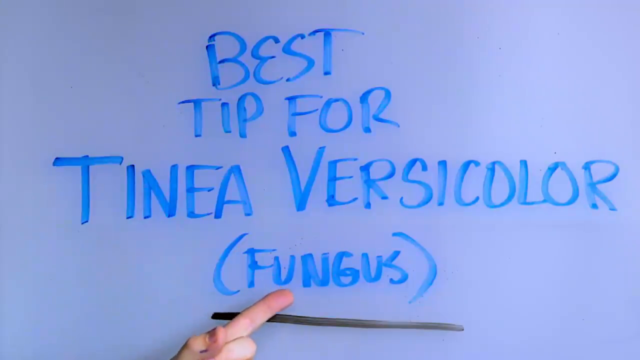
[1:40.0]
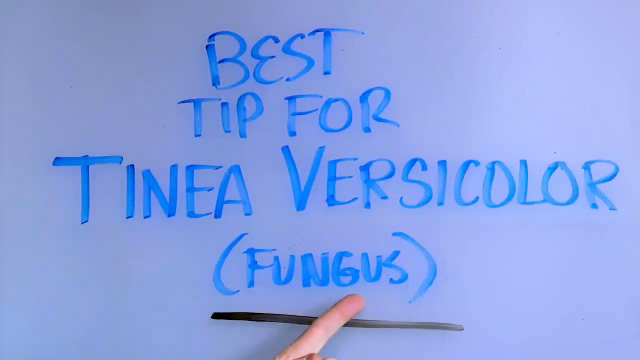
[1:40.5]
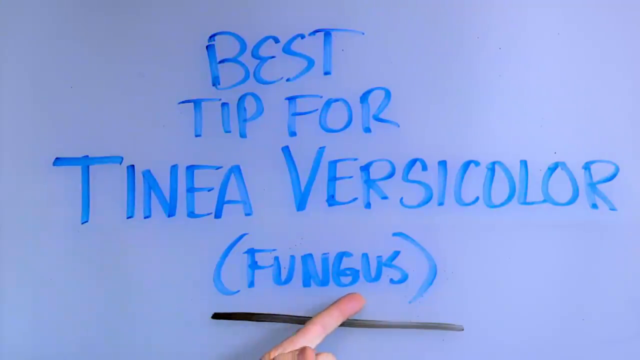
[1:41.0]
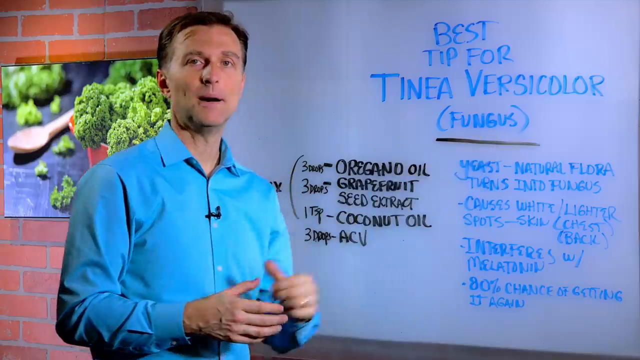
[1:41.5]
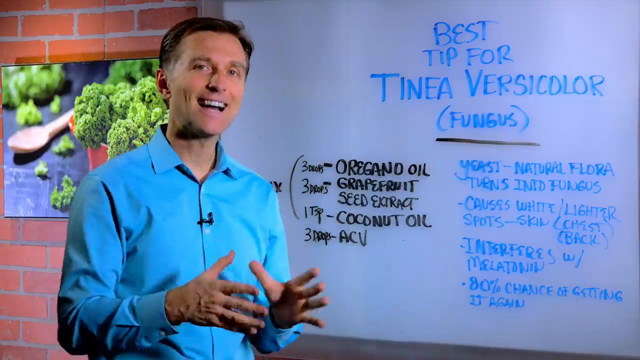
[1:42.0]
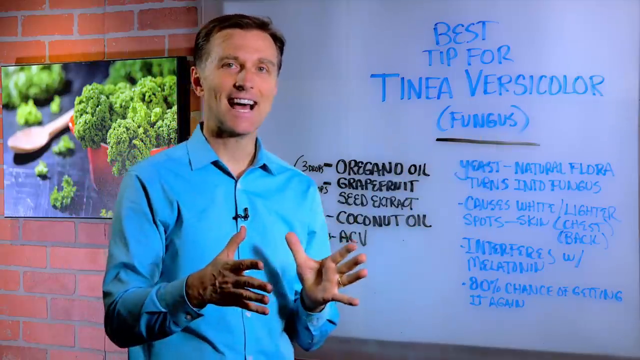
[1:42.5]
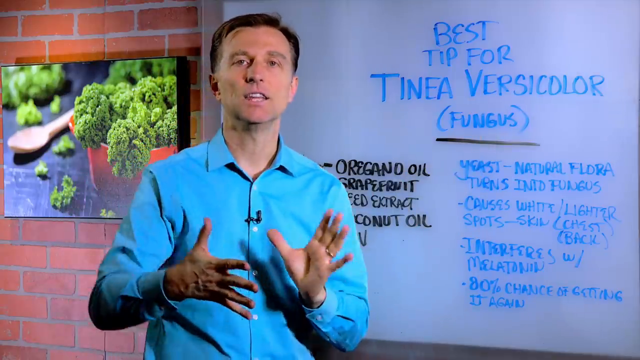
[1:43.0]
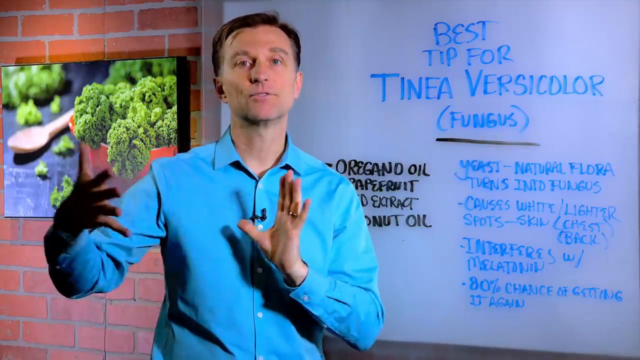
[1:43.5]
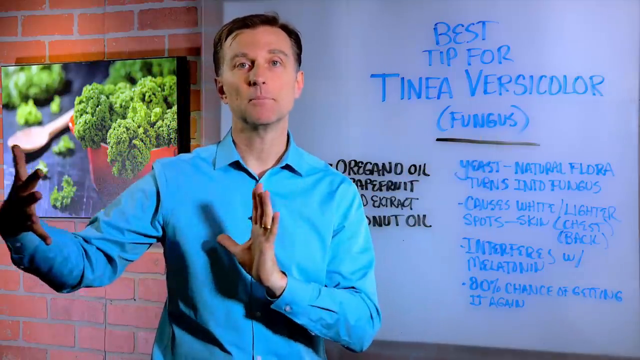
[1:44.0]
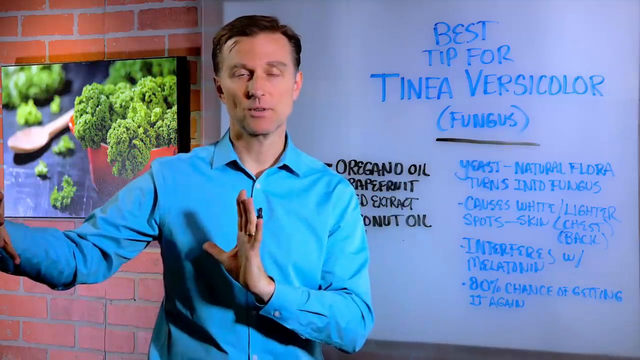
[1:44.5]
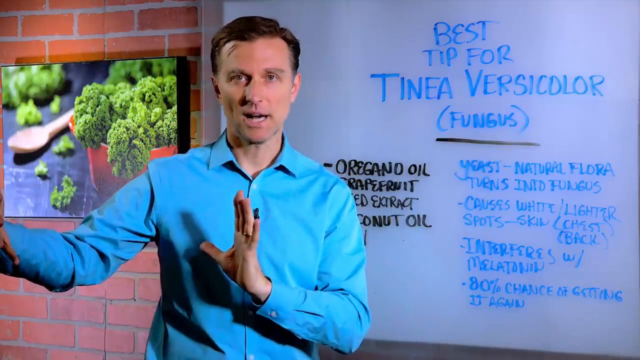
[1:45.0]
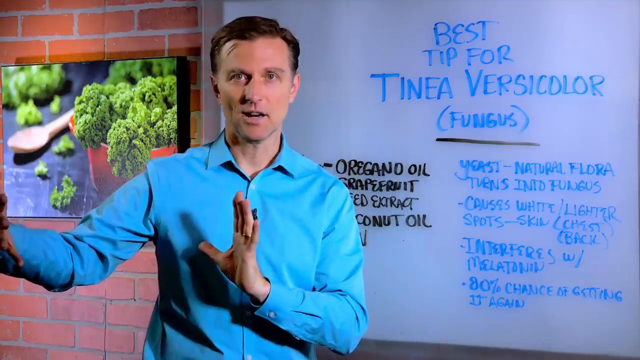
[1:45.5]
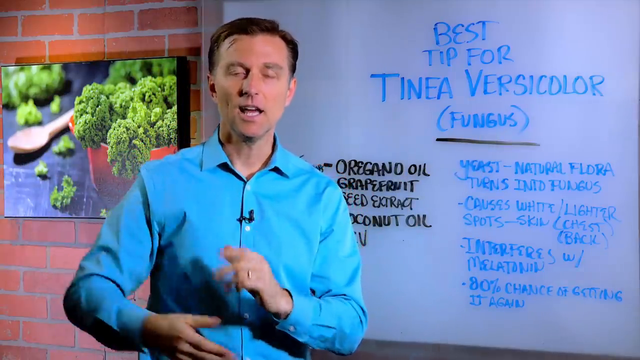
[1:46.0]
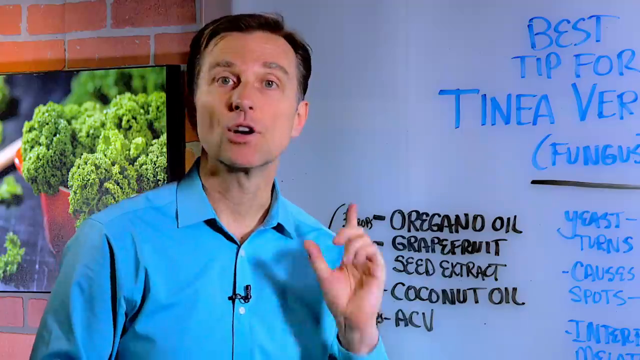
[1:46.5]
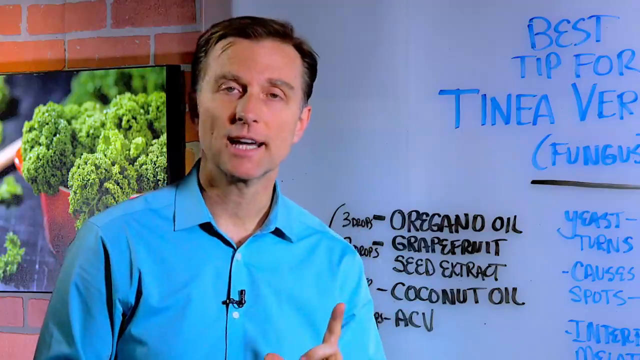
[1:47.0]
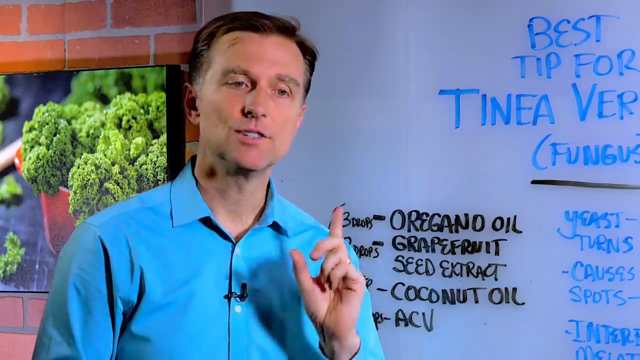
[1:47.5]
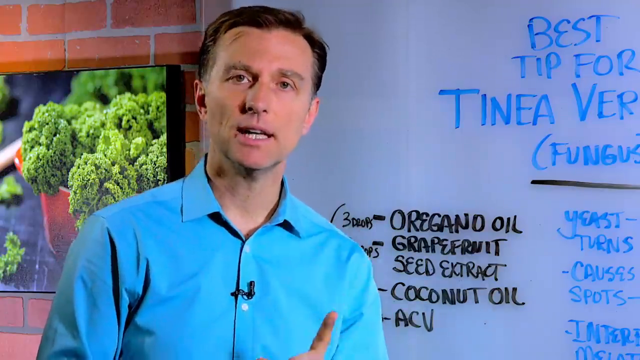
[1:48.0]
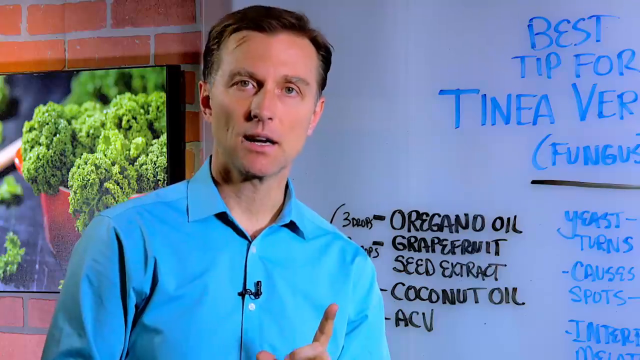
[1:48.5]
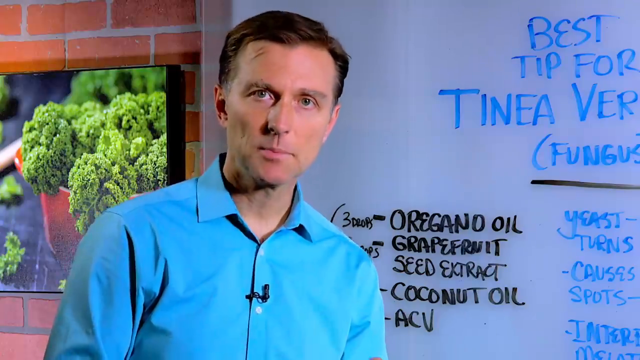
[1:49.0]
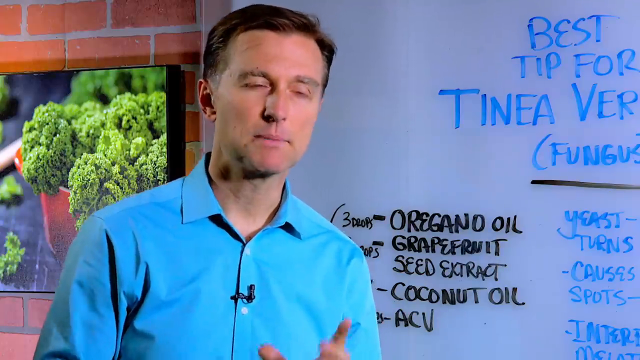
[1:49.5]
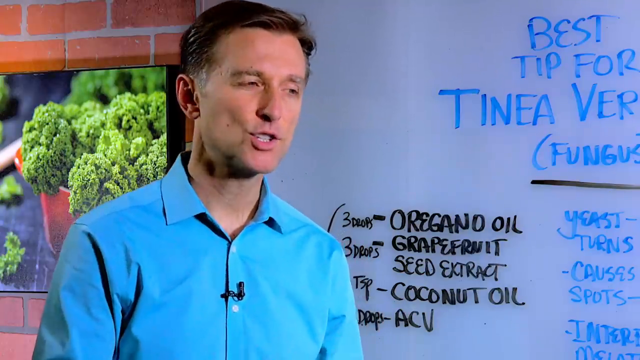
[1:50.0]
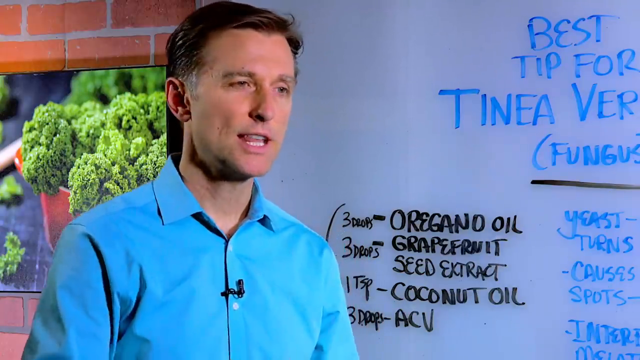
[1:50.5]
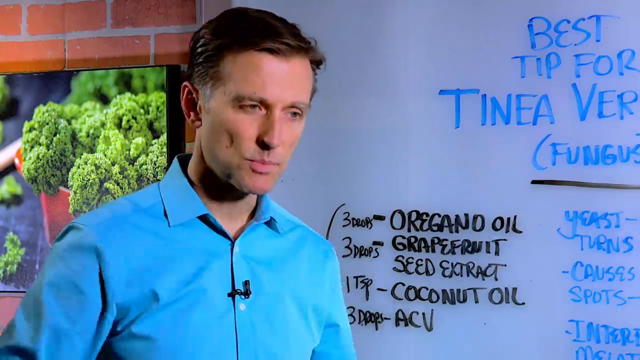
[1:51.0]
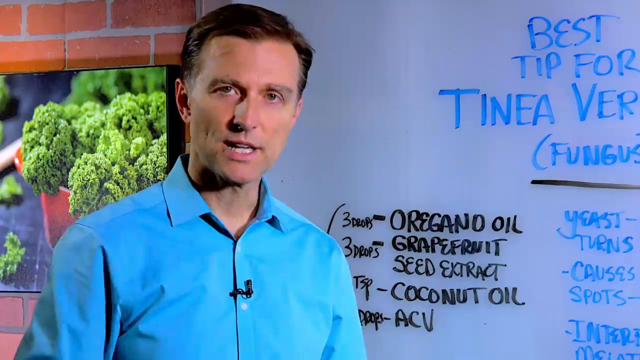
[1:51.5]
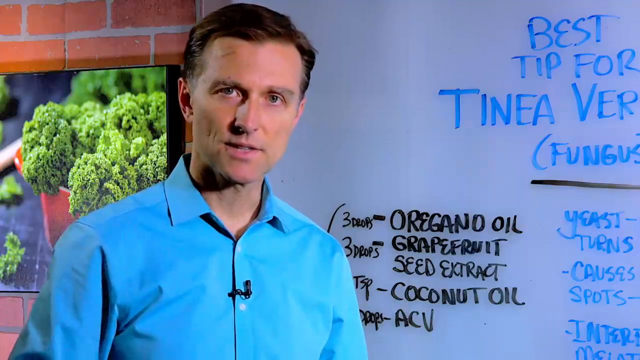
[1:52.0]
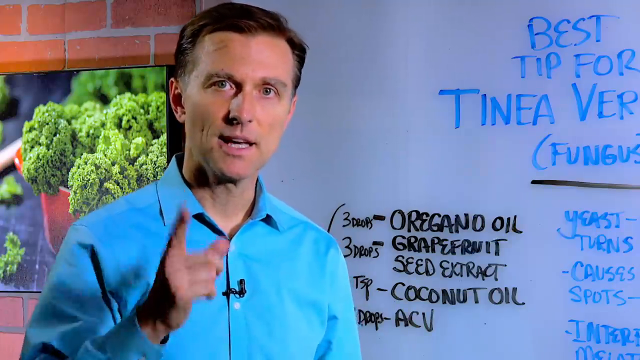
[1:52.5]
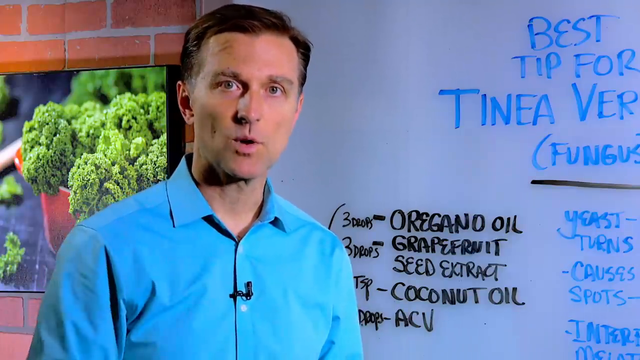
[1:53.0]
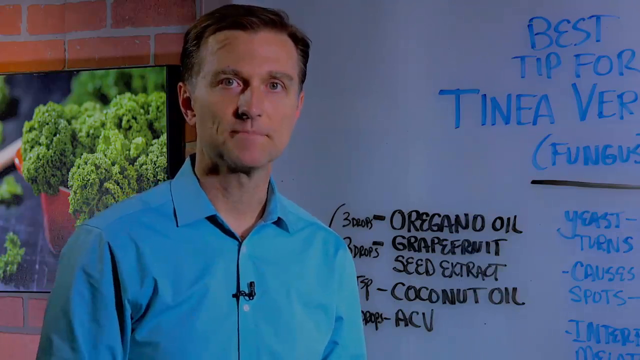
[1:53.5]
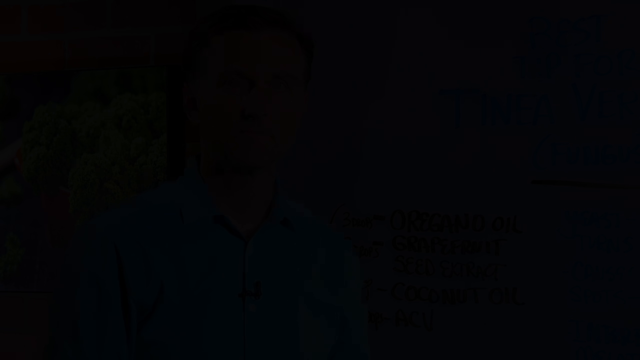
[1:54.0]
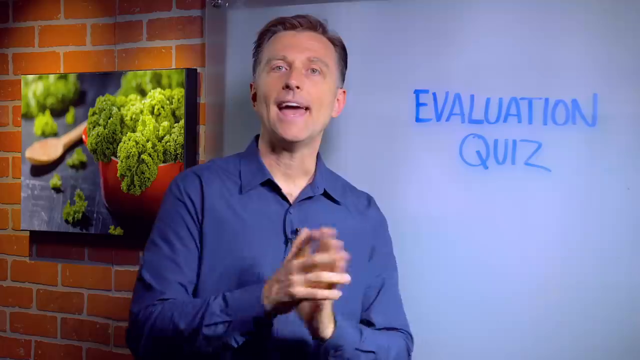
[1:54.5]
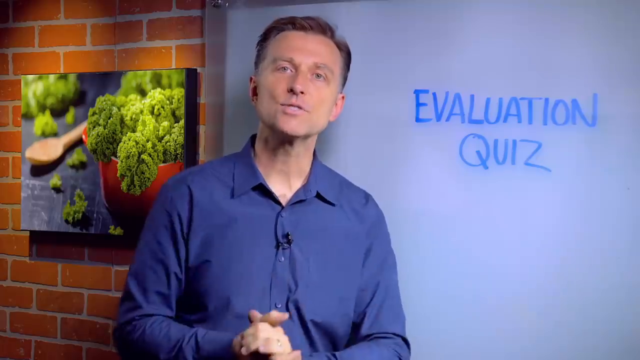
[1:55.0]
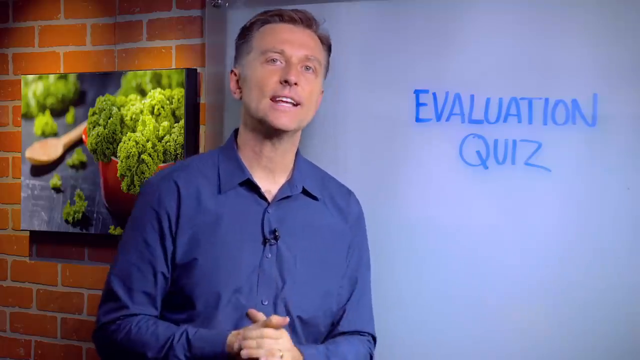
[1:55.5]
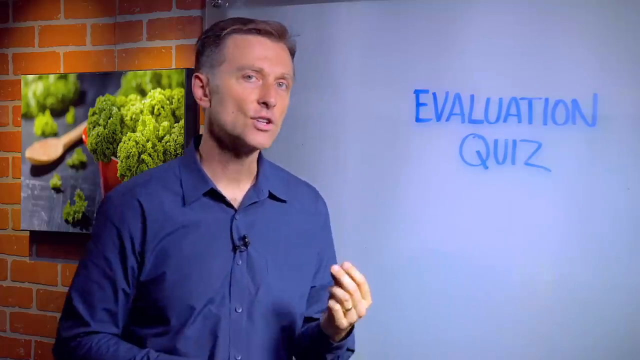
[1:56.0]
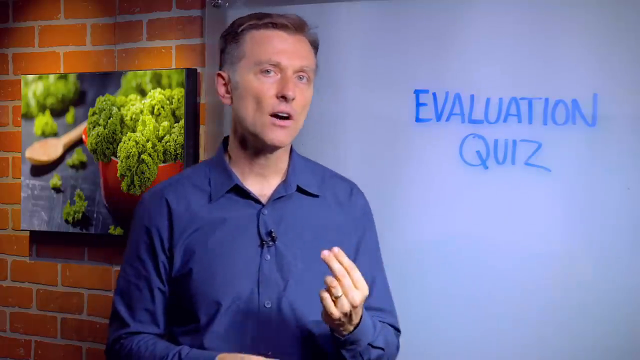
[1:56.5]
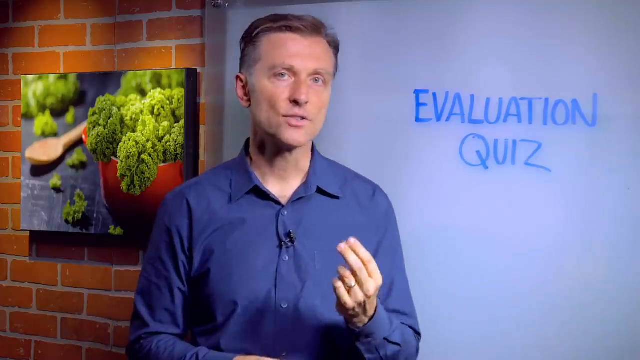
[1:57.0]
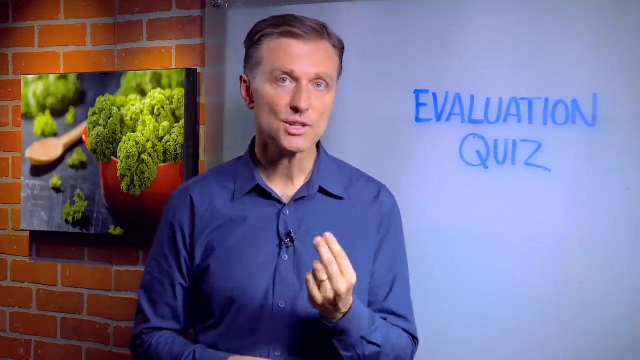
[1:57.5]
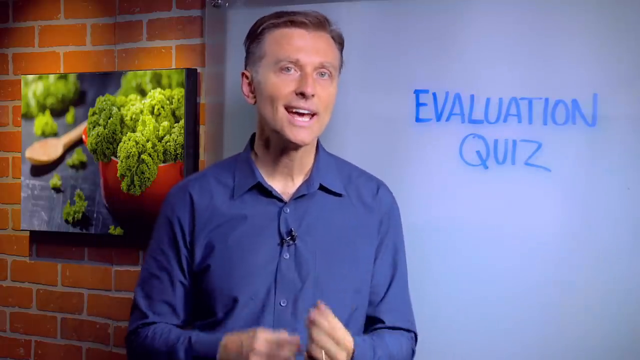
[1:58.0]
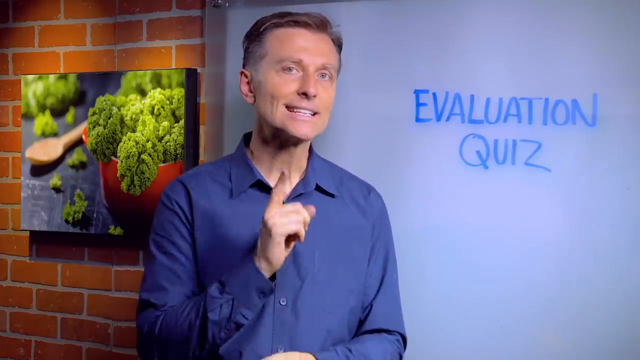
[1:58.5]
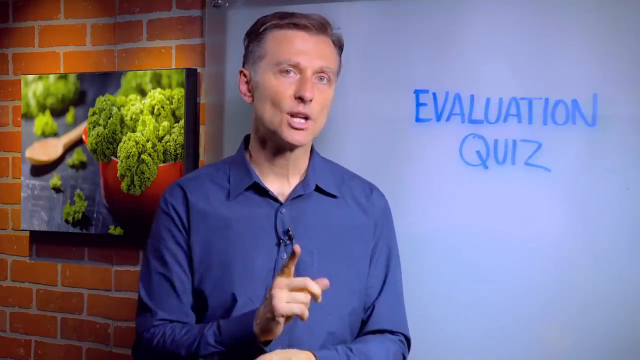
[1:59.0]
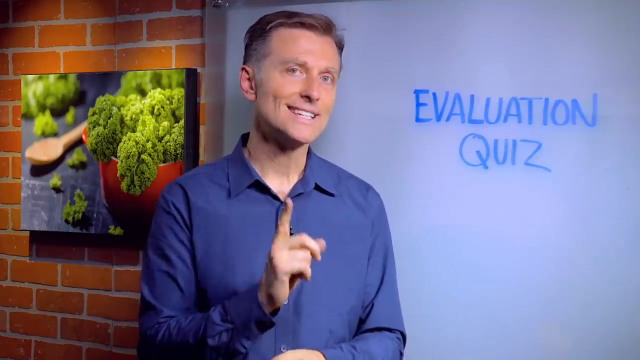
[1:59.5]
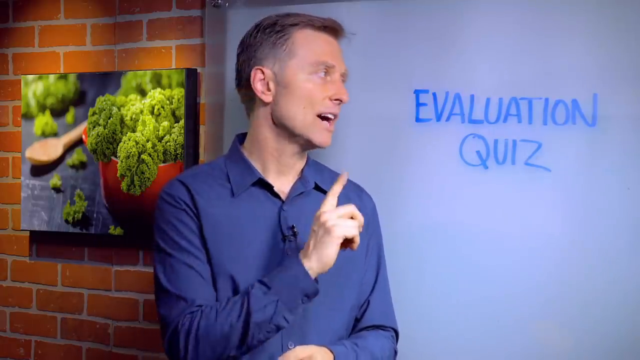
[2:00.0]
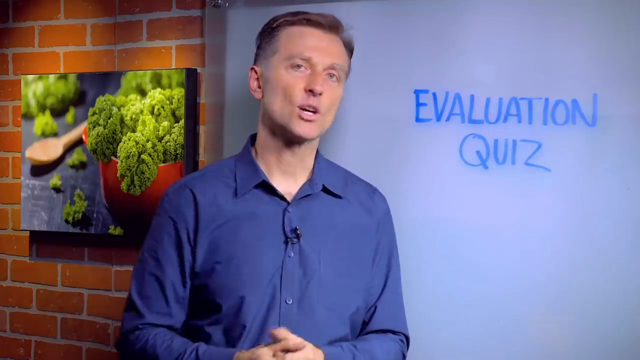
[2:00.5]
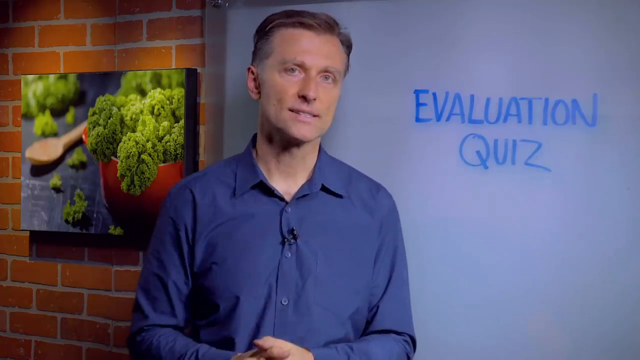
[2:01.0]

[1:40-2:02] The shot starts zoomed in on the words "best tip for tinea vesicular (fungus)", with his finger pointing to the word fungus. It zooms out to him in front of the board, talking toward the camera with his arms extended at a 90-degree angle out from his body, palms open. He moves one arm in front of his chest and extends the other out to the viewer's left, his right, then brings his arms back in. The camera zooms in to a medium shot of his shoulders, face and a little of the board in the background. He points up toward the ceiling, apparently emphasising a single point. His hands go out of view as he keeps talking, then his left finger comes up very quickly, apparently to mention one more point. Finally the shot fades to black and comes back: the same man is now standing in front of the board in a dark blue button-up shirt, and the board says only "evaluation quiz".